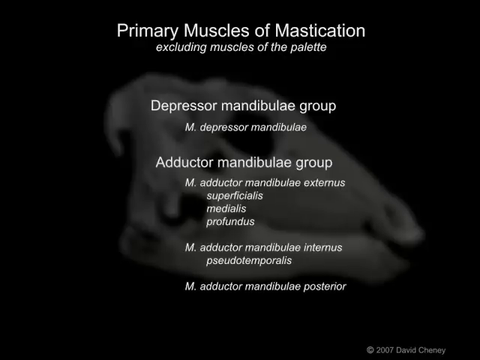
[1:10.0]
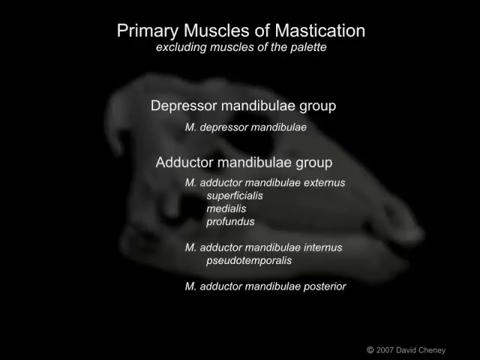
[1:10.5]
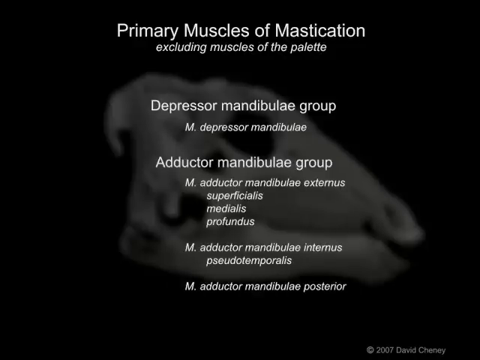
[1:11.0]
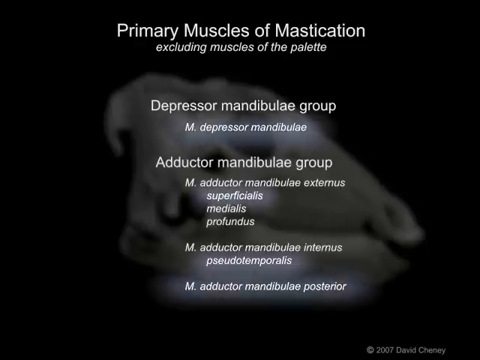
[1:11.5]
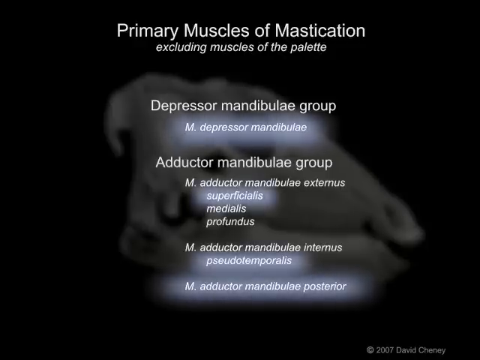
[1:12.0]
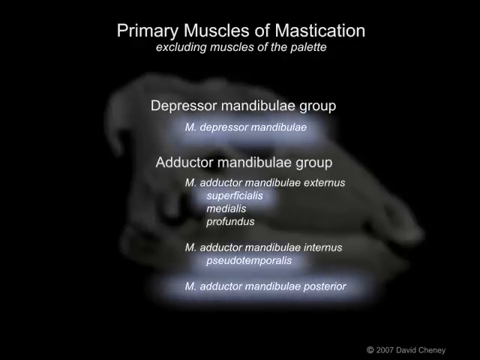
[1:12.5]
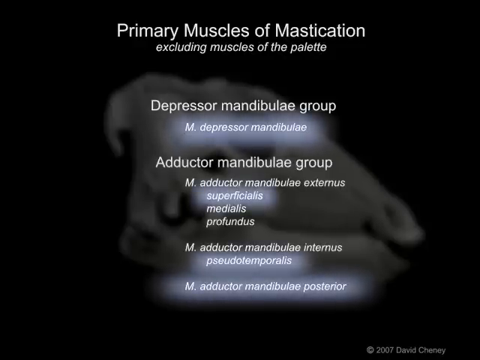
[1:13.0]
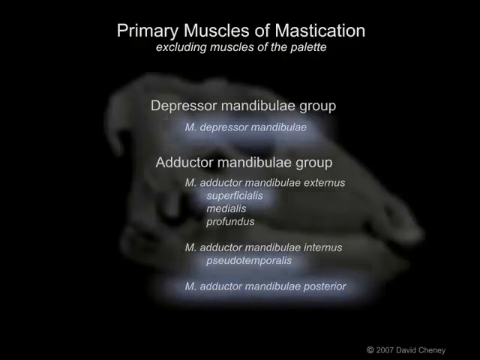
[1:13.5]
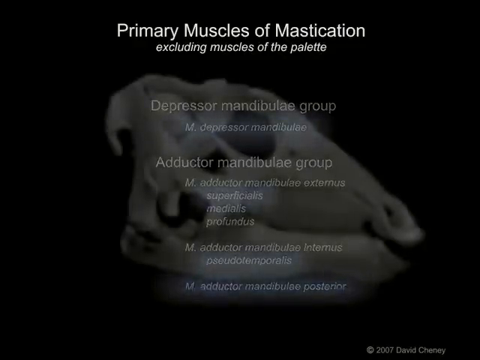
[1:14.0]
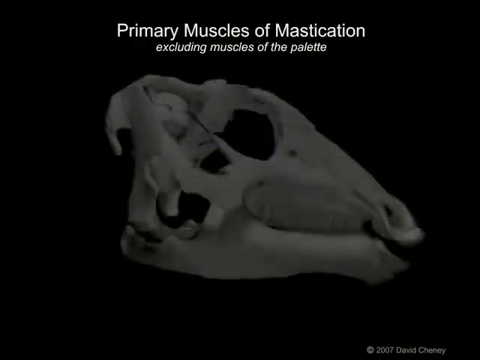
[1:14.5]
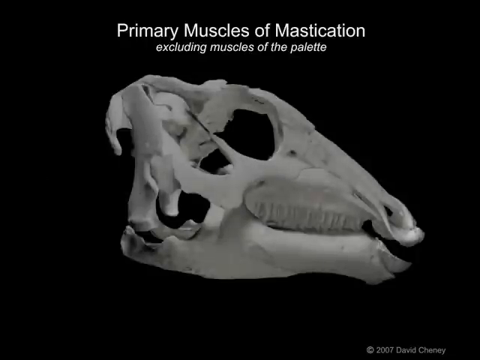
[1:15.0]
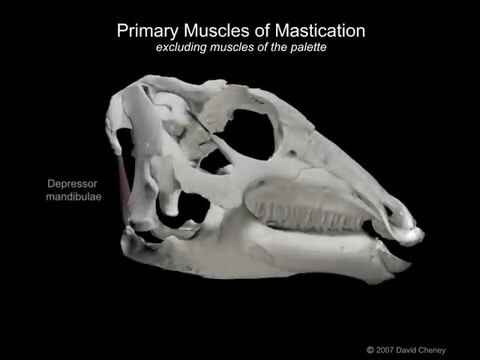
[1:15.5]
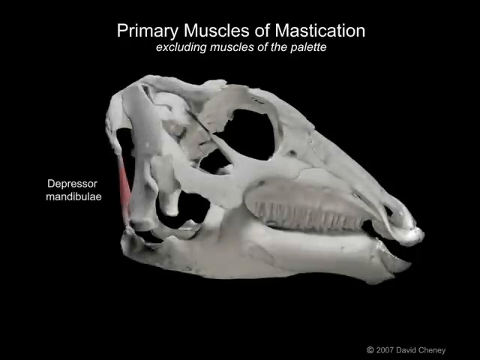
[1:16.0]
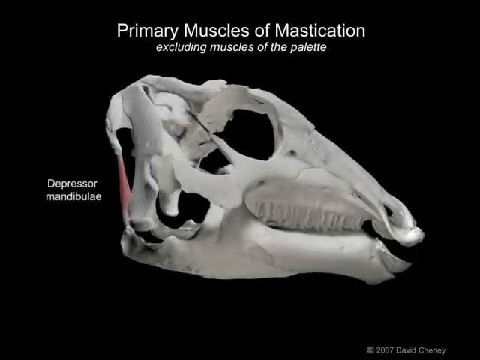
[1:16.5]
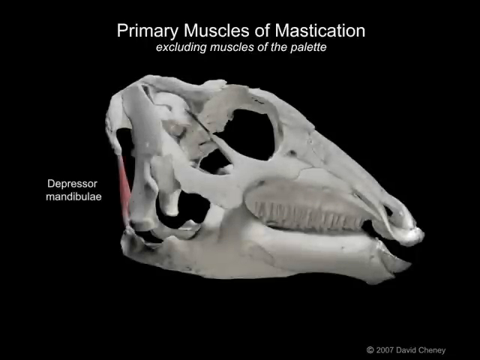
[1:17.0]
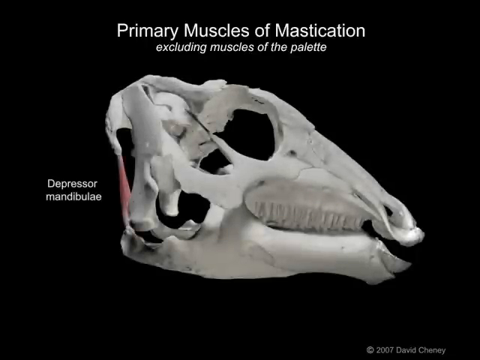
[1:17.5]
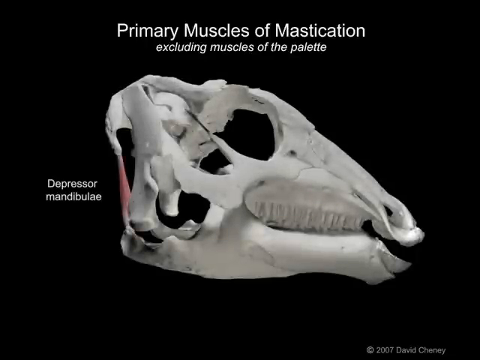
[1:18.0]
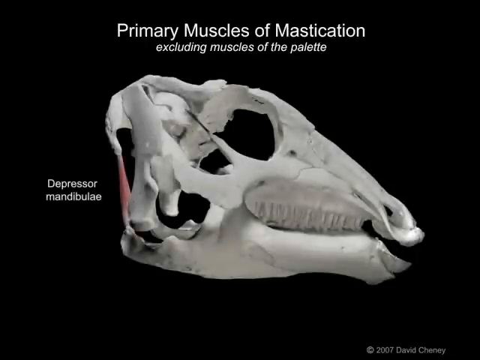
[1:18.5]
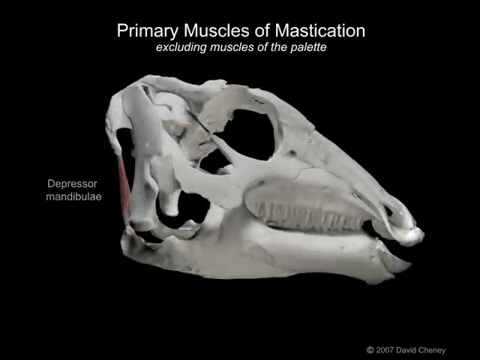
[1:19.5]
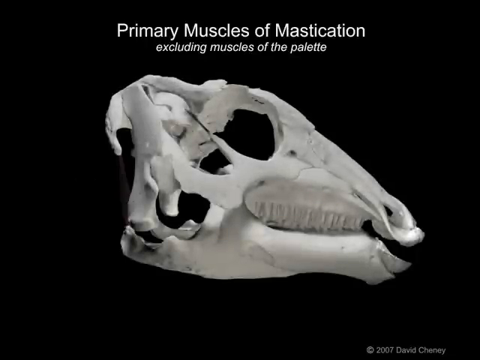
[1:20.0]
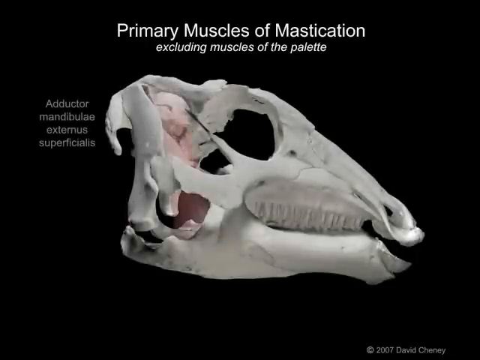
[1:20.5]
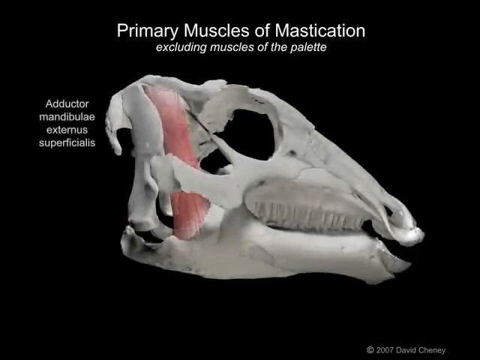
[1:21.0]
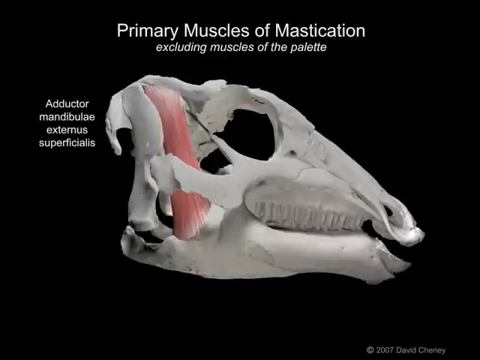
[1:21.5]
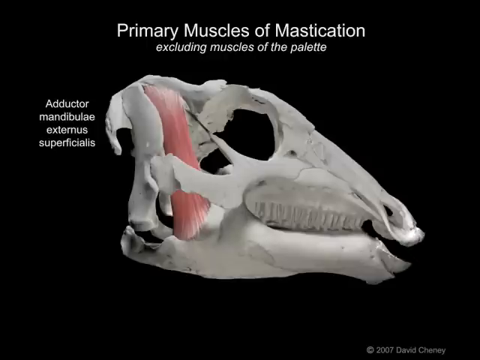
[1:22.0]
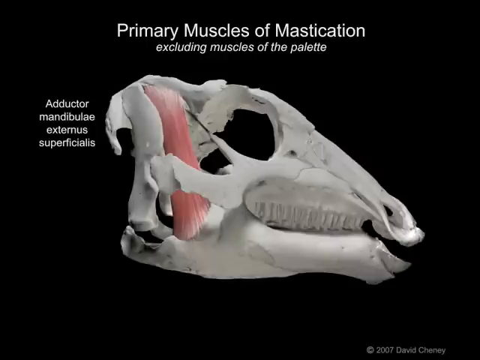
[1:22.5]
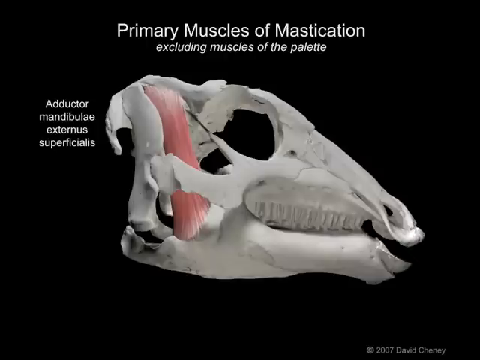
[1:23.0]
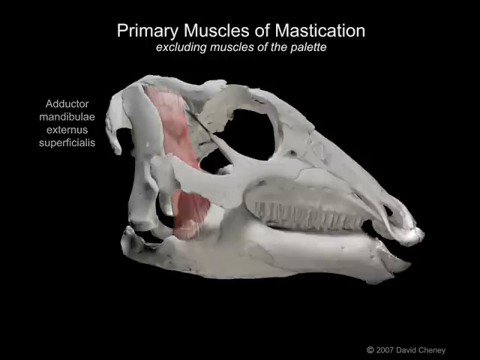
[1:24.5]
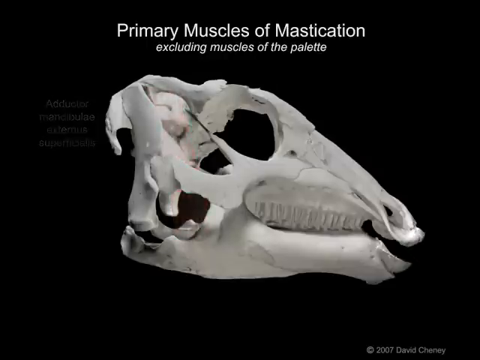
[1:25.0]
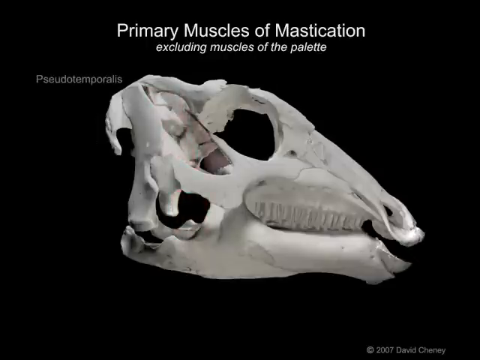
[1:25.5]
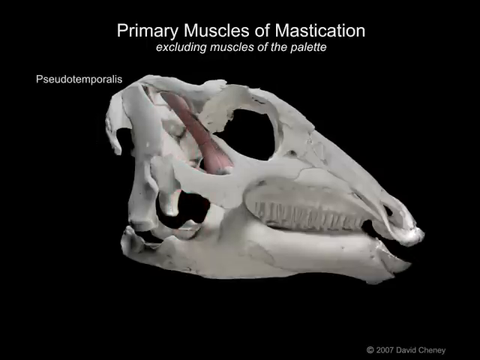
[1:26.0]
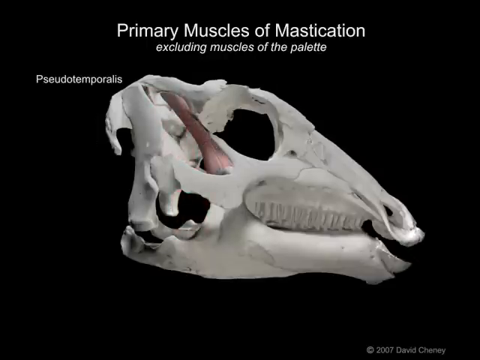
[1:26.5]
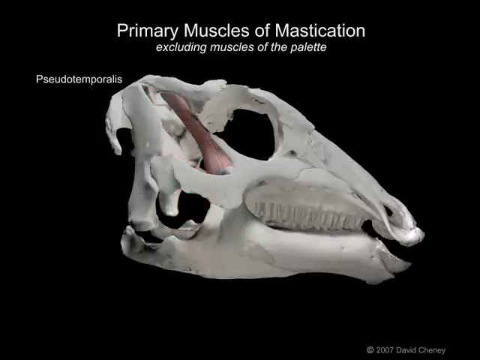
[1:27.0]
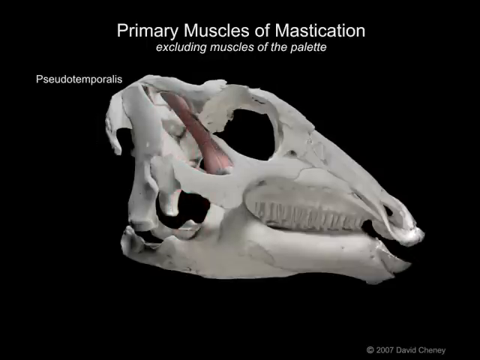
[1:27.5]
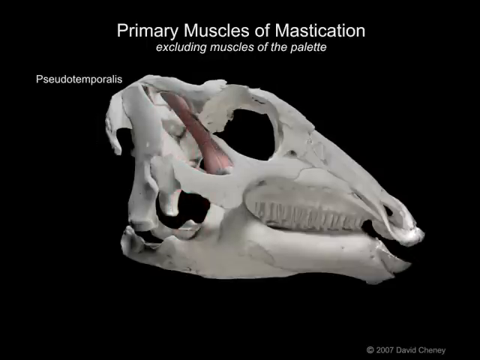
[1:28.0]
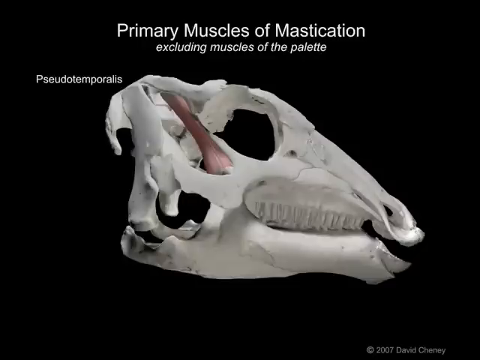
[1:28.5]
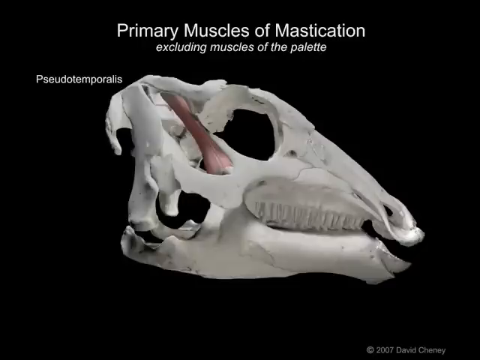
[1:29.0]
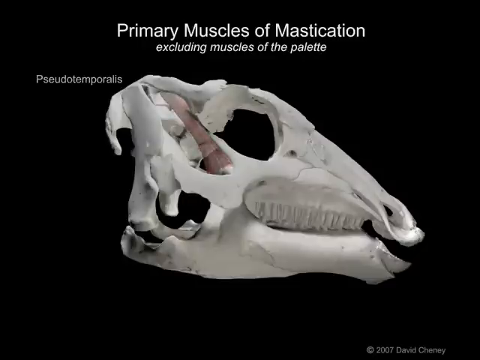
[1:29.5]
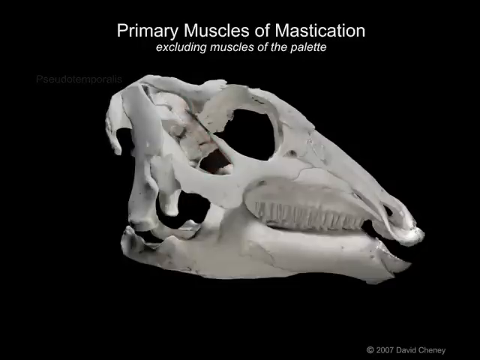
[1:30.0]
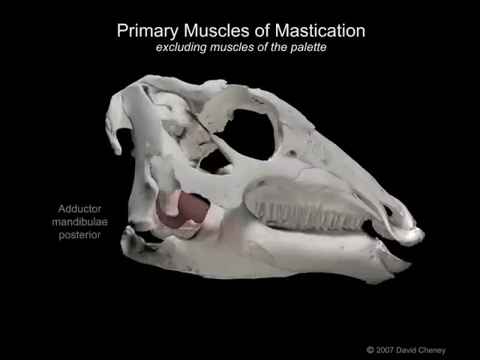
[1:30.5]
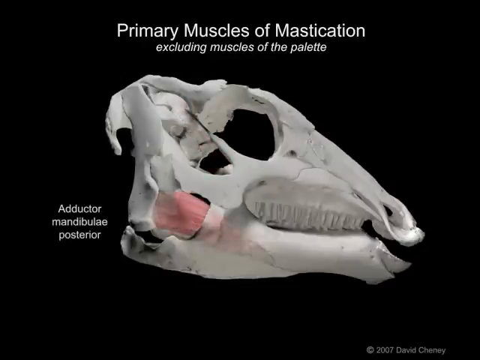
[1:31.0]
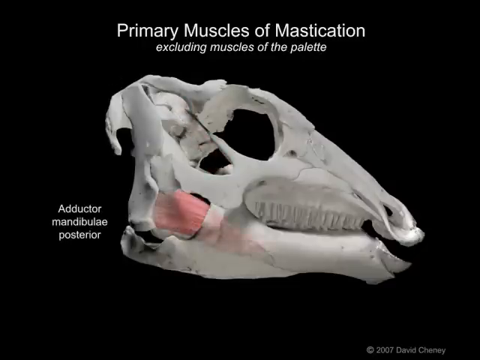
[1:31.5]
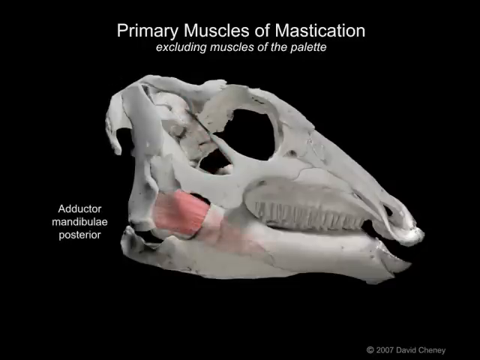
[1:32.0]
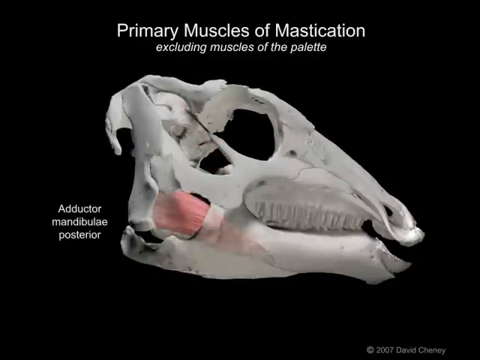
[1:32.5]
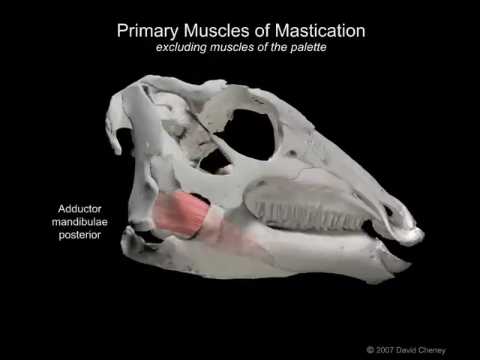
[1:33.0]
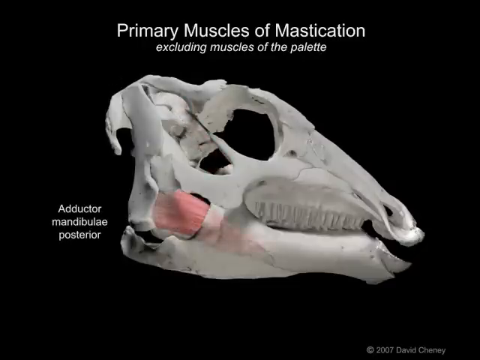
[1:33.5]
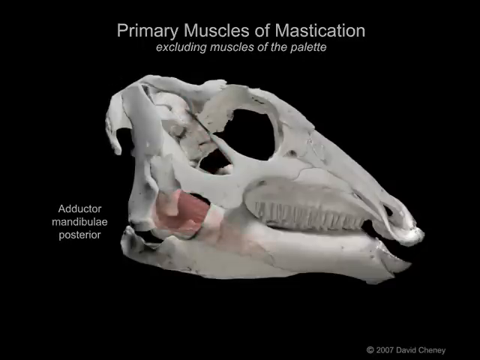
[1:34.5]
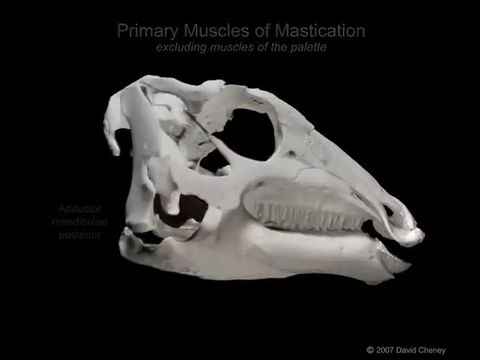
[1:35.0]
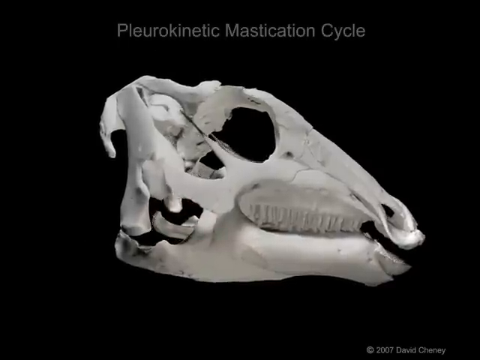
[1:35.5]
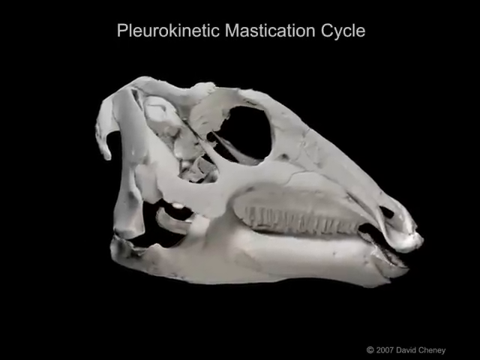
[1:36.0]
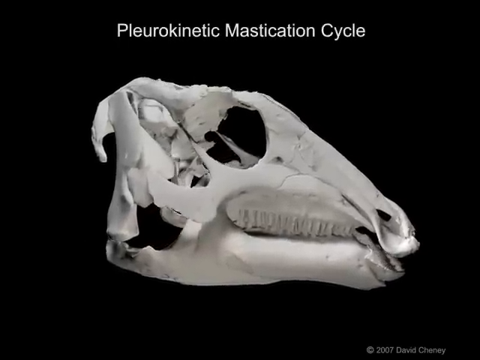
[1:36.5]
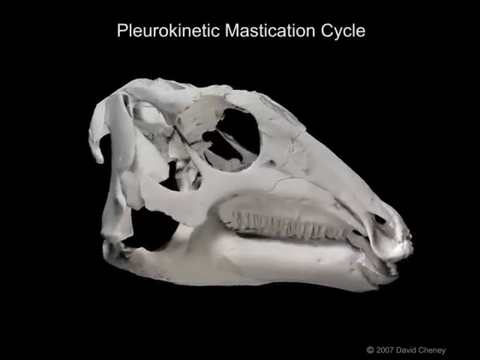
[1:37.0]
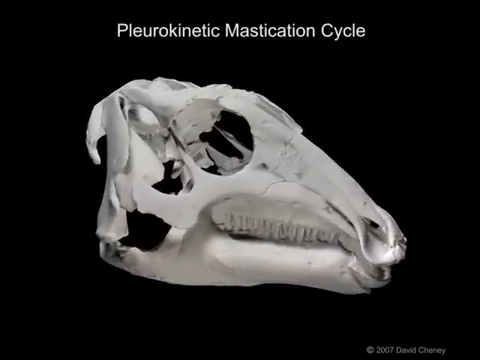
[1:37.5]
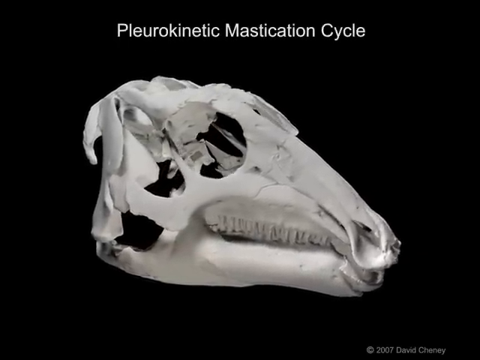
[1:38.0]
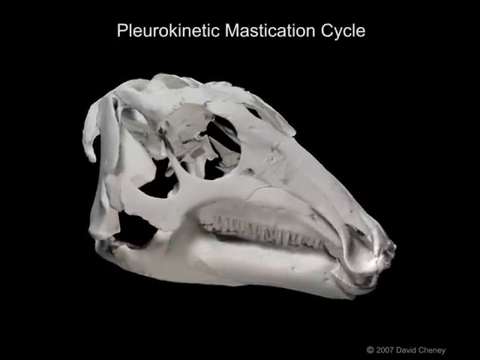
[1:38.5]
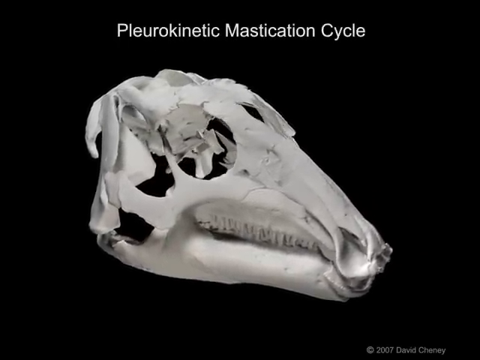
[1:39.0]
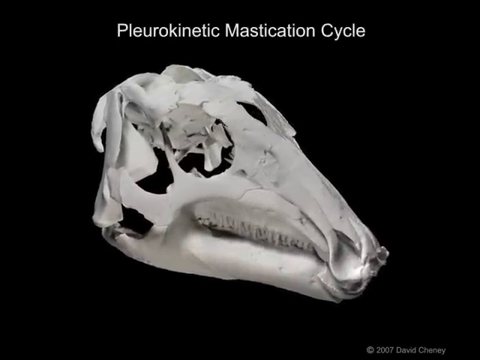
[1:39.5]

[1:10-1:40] On the black background, the dinosaur skull is faded in the middle, still facing right in a profile view. White text reads "primary muscles of mastication," with "excluded muscles of the palate" beneath it. Underneath that is "M depressor mandibula," followed by an "adductor group" with several items listed under it. Labels then appear on the skull: a depressor area at the back of the skull, an adductor area, an area labeled "pseudotemporalis" highlighted in red, and at the bottom "adductor mandibulae posterior." Toward the end the title changes to "pleurokinetic mastication cycle."